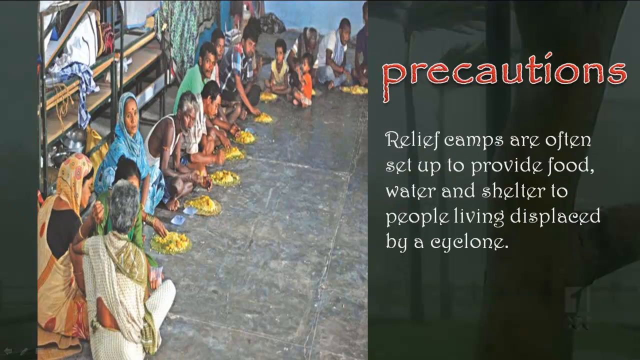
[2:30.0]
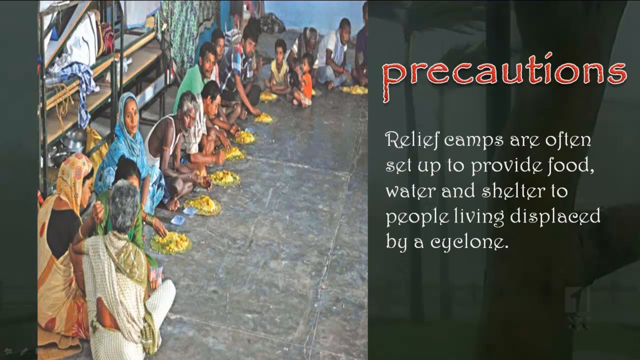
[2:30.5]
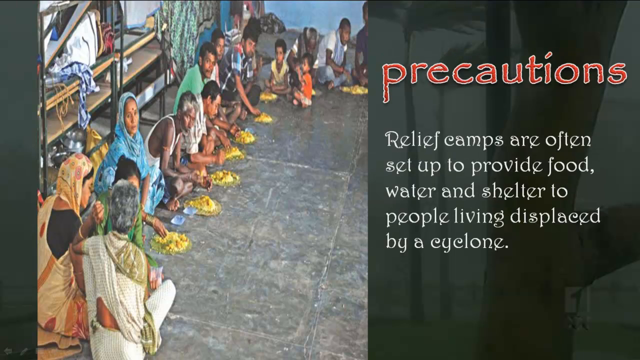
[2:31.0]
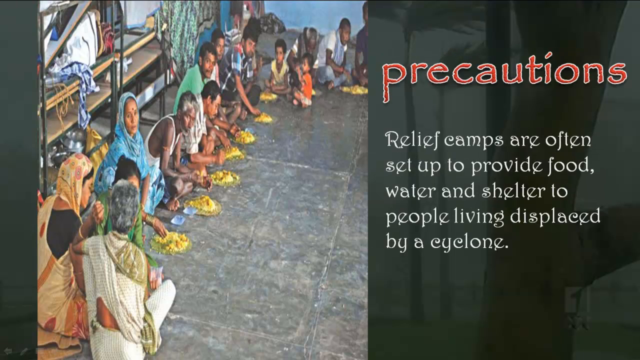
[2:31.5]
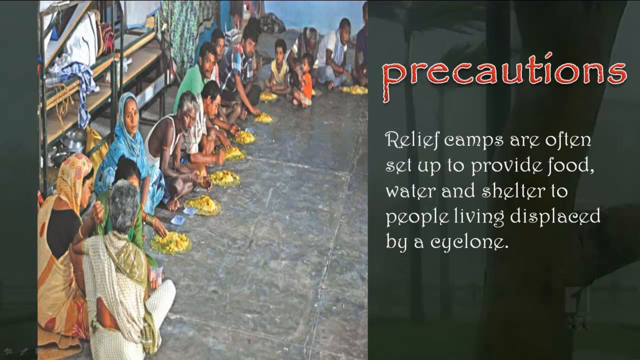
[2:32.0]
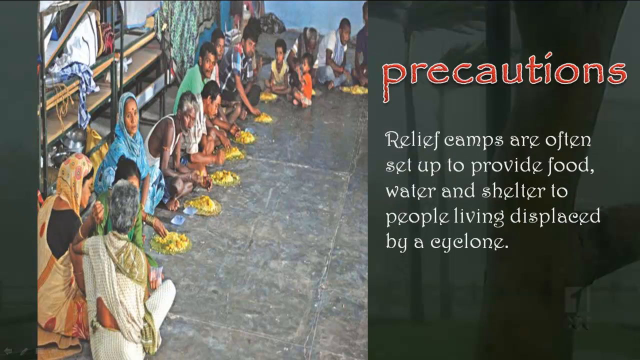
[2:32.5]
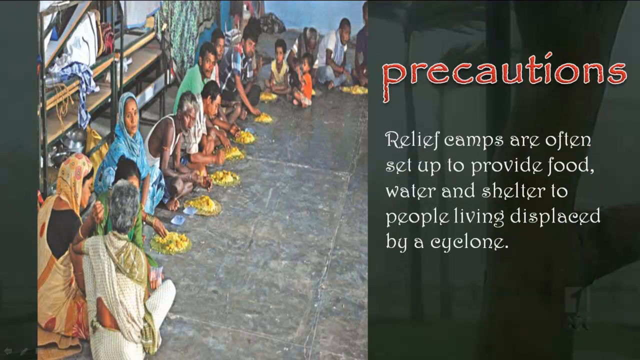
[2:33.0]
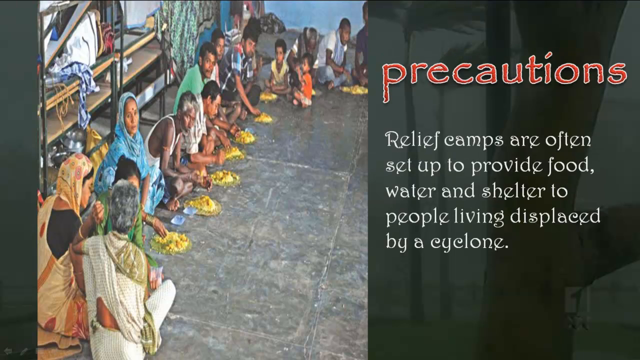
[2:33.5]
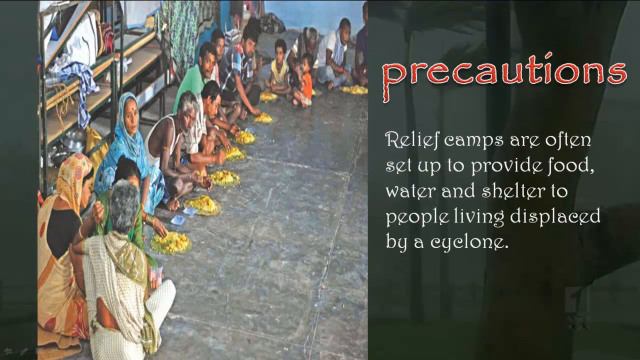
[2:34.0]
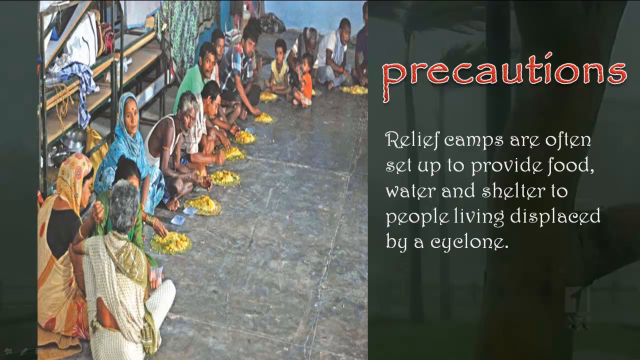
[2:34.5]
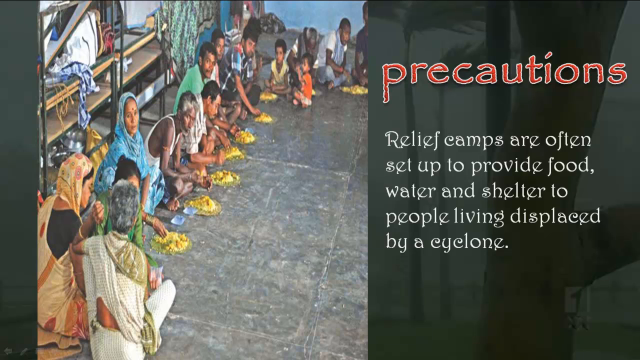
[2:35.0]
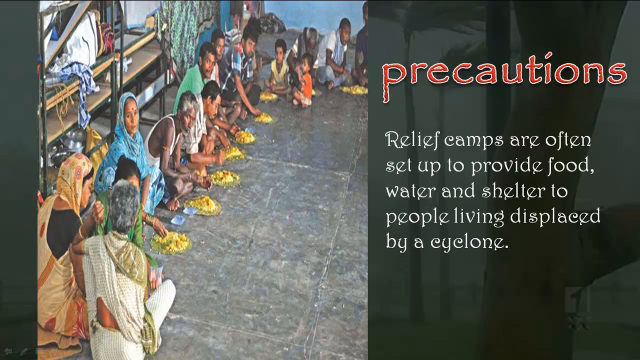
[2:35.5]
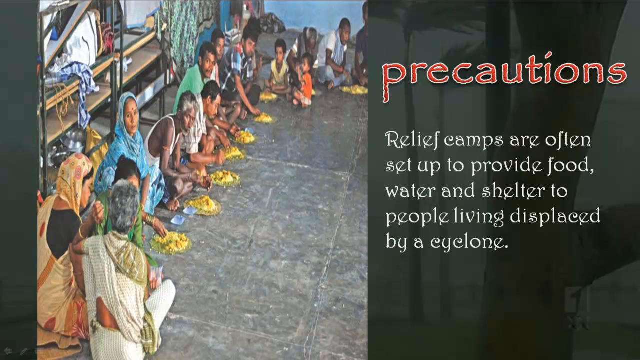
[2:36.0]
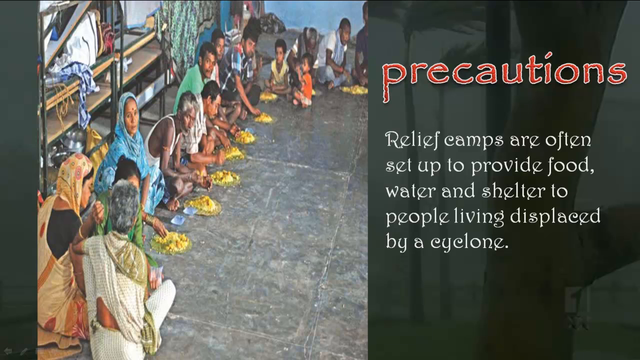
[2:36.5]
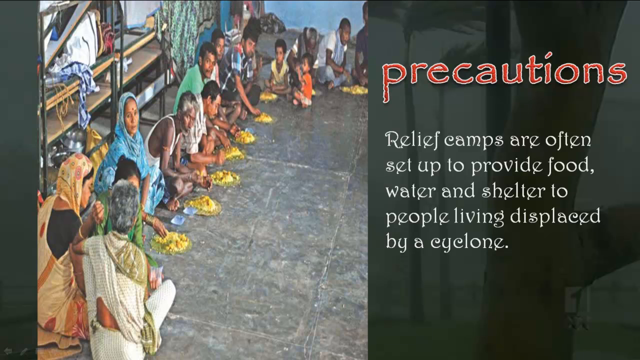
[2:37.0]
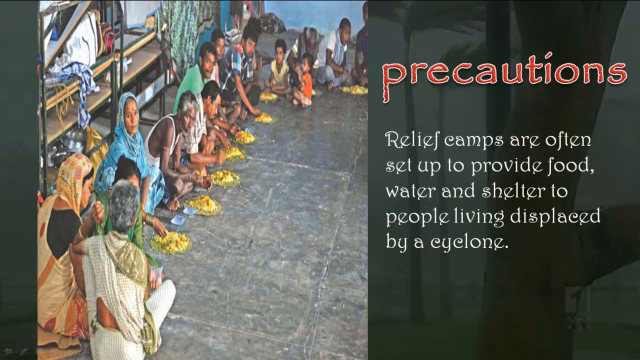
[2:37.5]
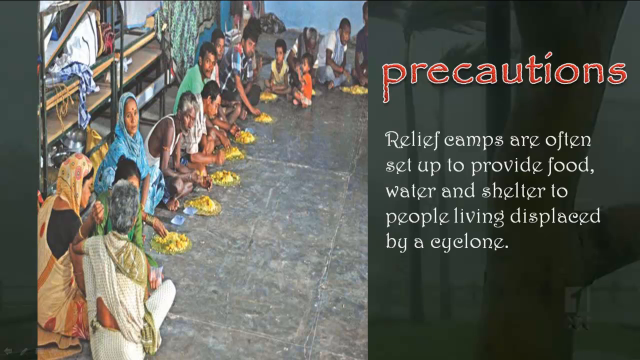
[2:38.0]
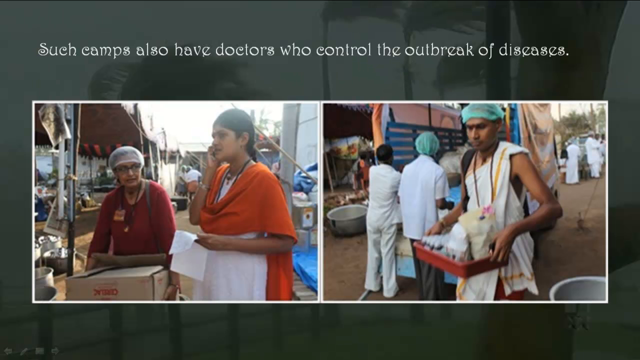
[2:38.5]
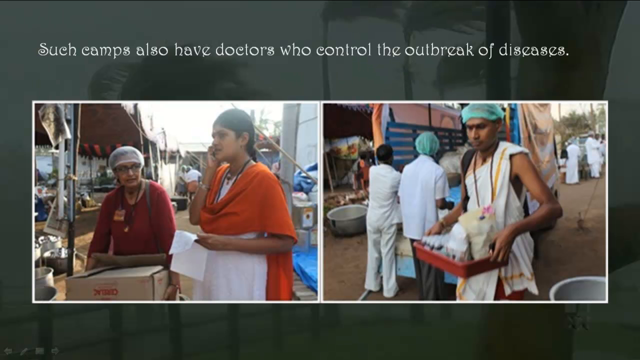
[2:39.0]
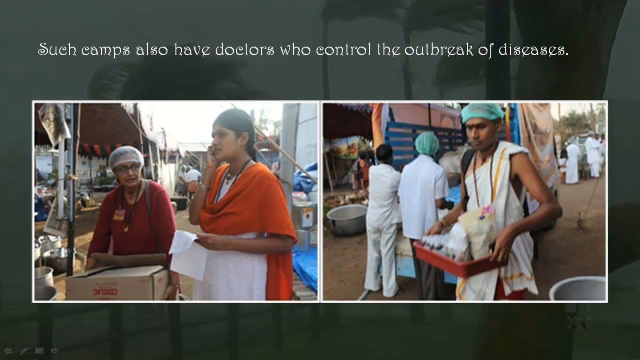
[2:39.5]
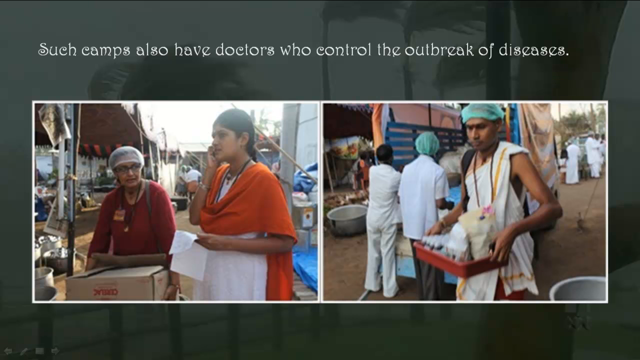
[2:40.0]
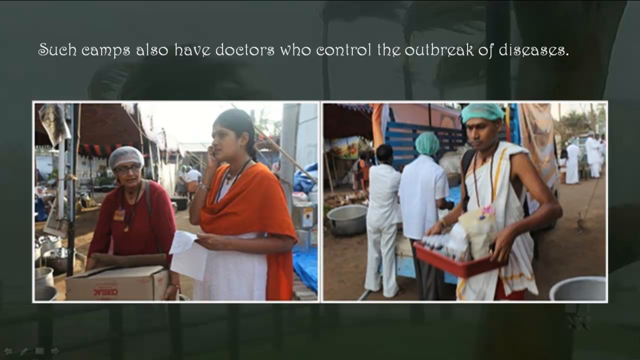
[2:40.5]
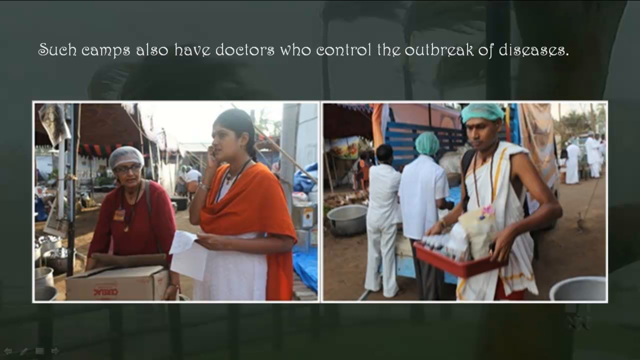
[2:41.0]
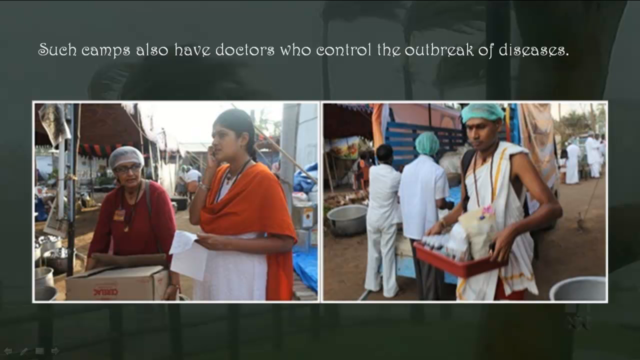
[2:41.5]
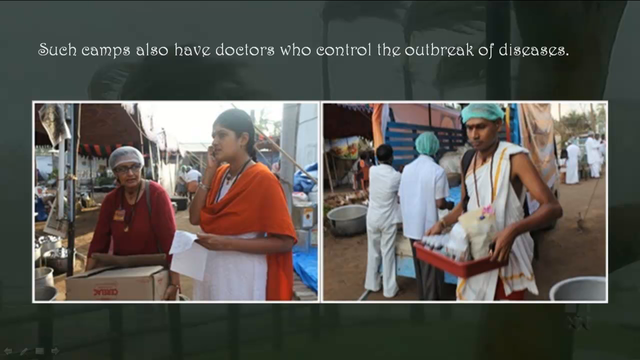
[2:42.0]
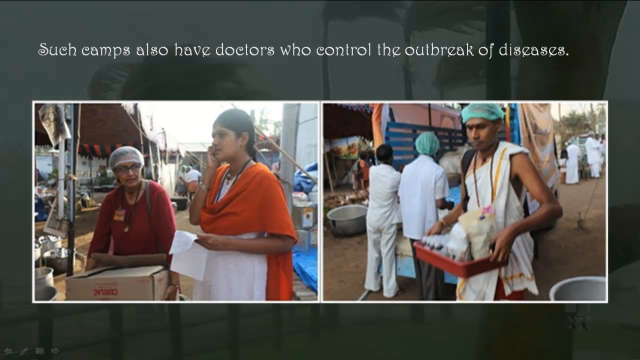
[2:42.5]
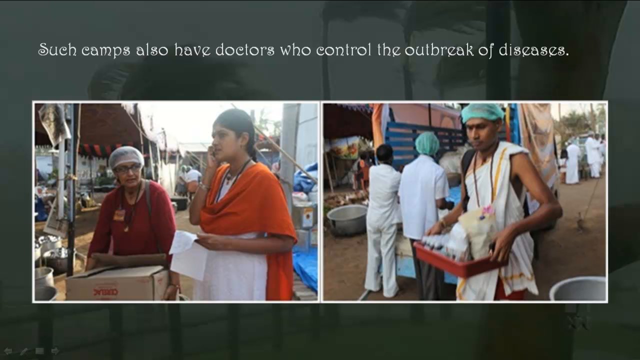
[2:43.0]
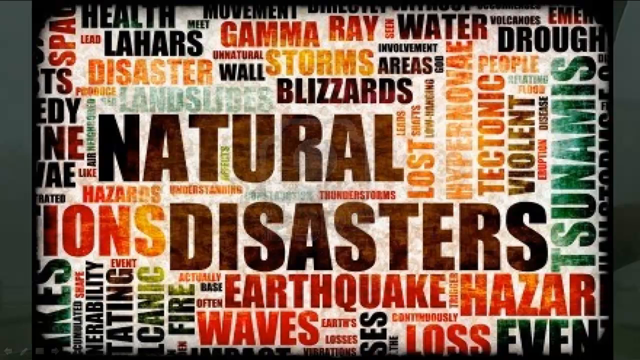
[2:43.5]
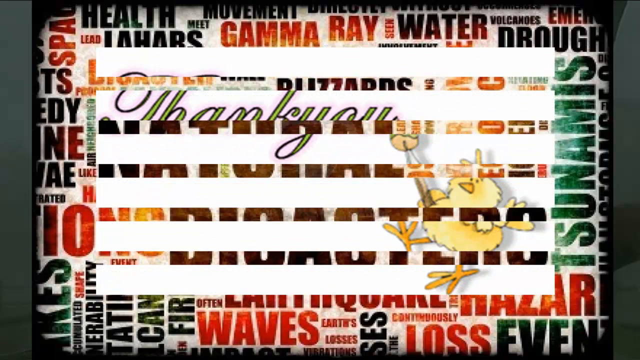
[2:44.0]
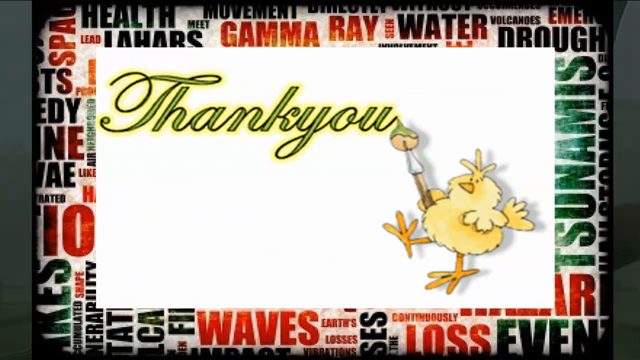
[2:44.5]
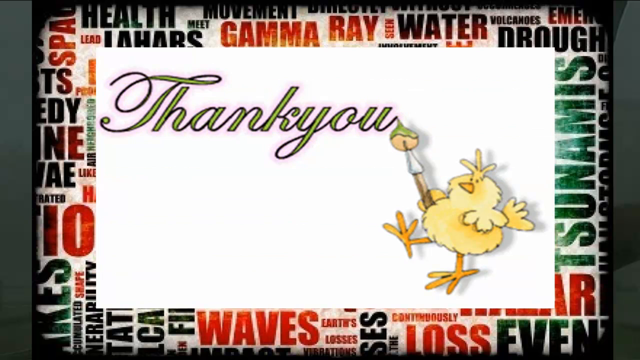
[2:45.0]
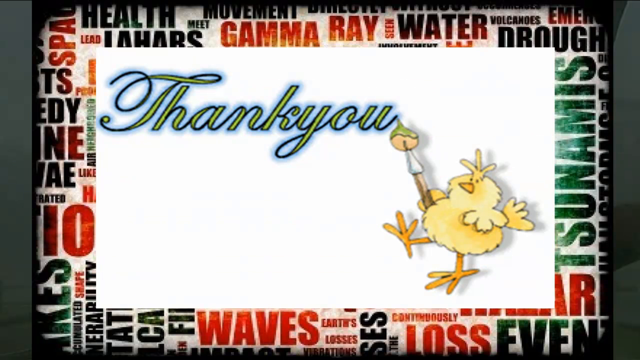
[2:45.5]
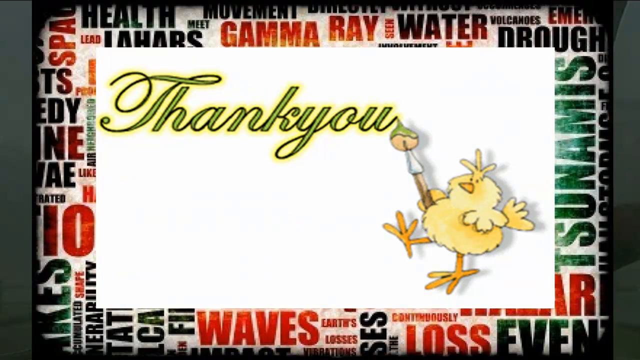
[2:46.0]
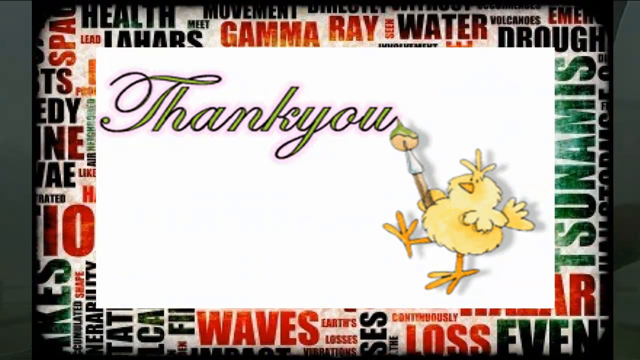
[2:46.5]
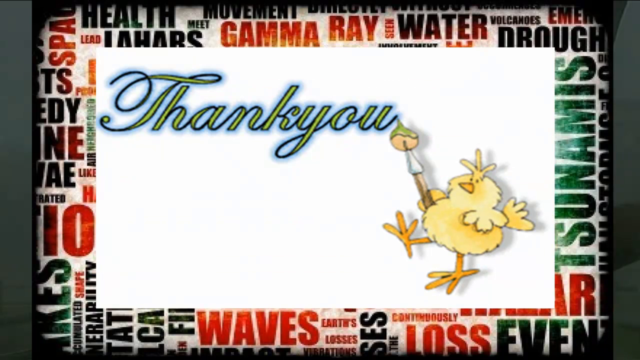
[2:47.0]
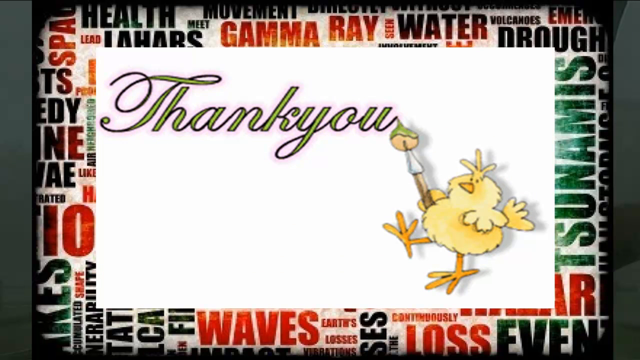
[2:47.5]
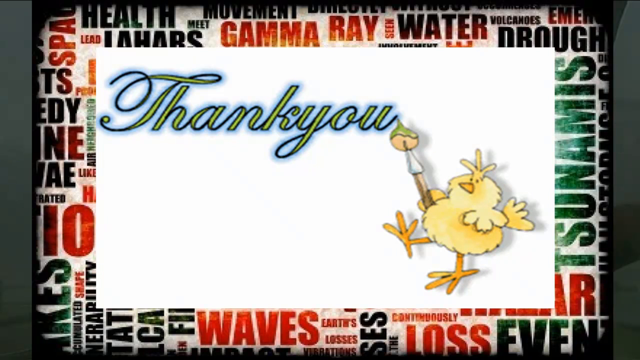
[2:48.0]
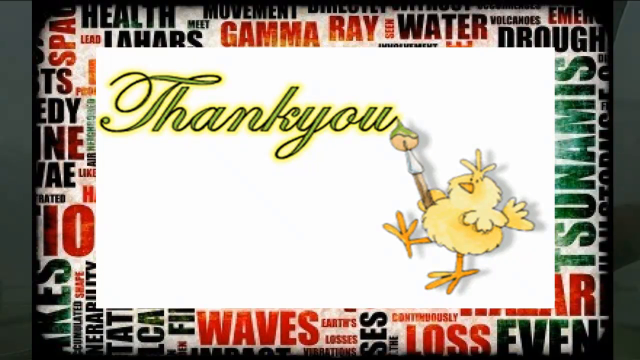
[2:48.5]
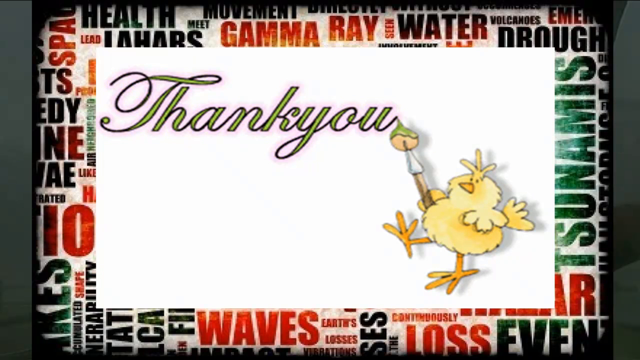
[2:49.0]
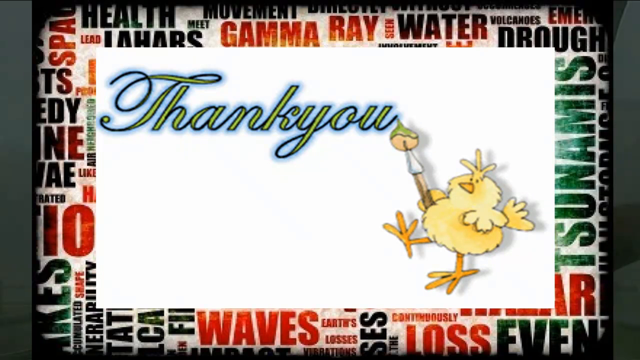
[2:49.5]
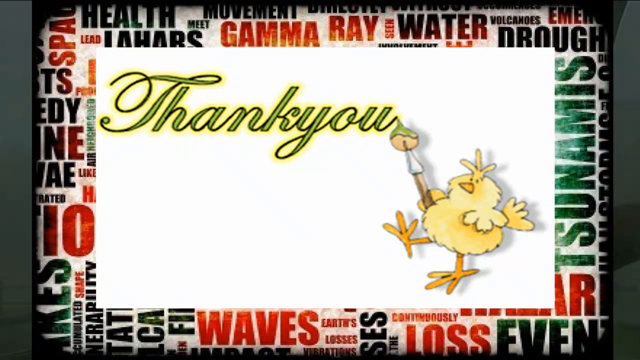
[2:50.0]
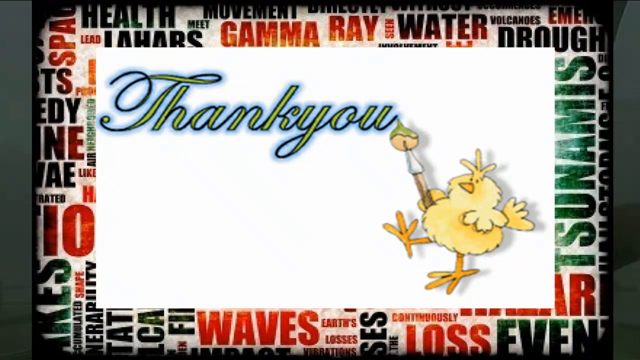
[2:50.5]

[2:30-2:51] The relief camp precaution remains on screen, showing people sitting on the ground eating in the camp, safe and with things to eat. The next slide says such camps also have doctors who control outbreaks of diseases, with two women doctors on the left and, on the right, a man wearing a toga bringing some groceries. At the end, a thank-you appears: a bird, referred to as a chicken, holds paint and paints "thank you," which radiates in colours such as yellow, blue and pink.